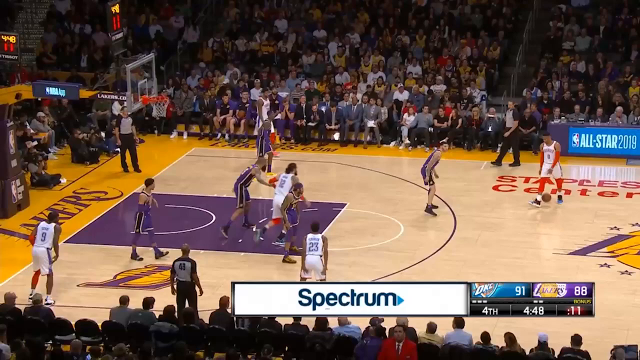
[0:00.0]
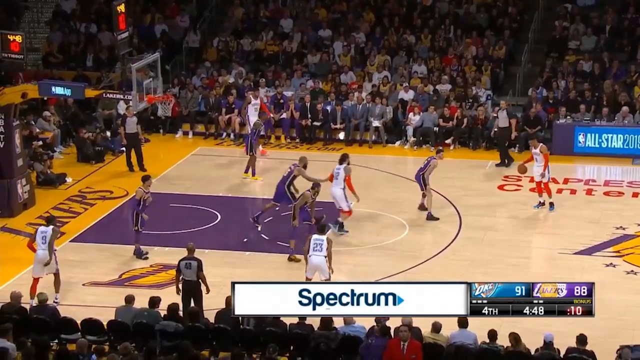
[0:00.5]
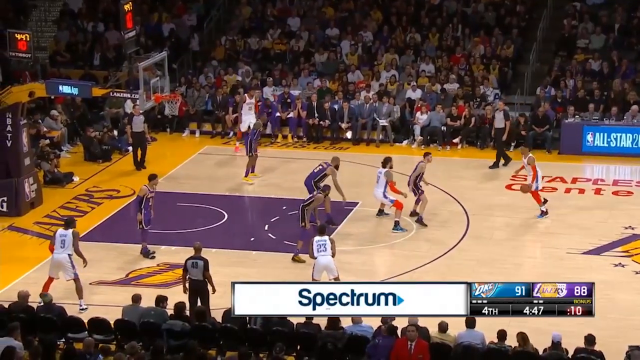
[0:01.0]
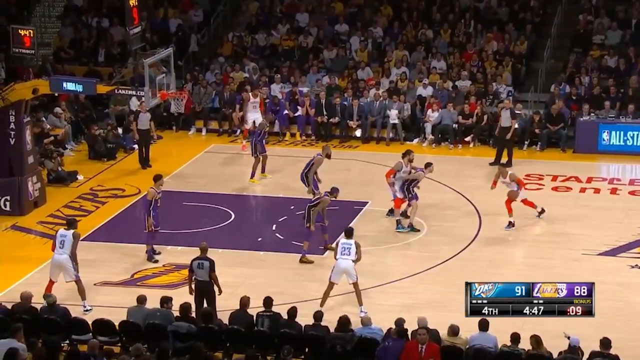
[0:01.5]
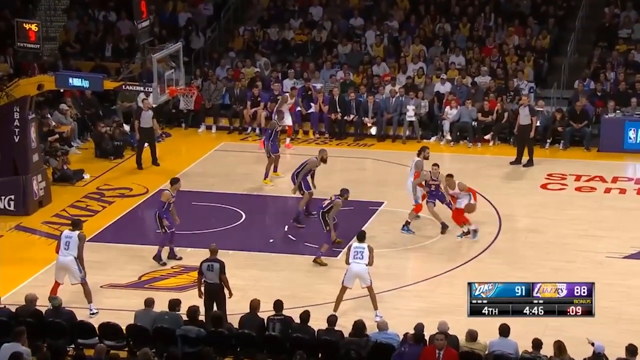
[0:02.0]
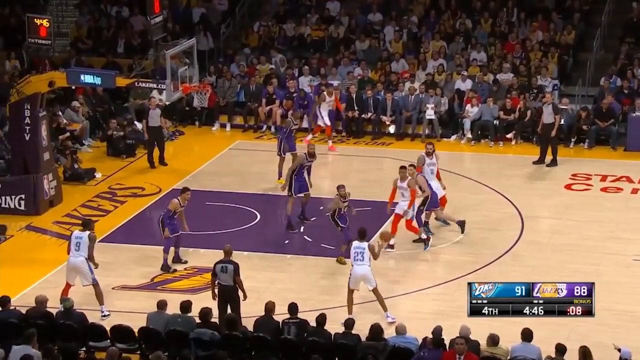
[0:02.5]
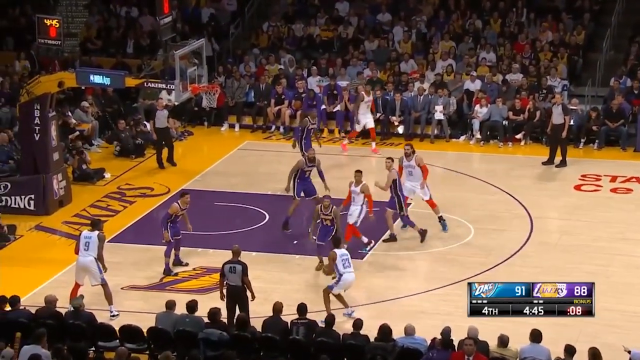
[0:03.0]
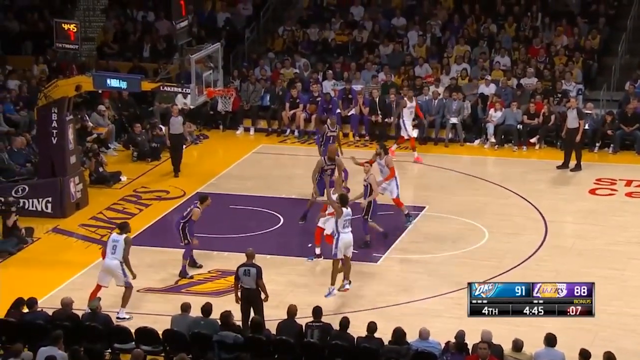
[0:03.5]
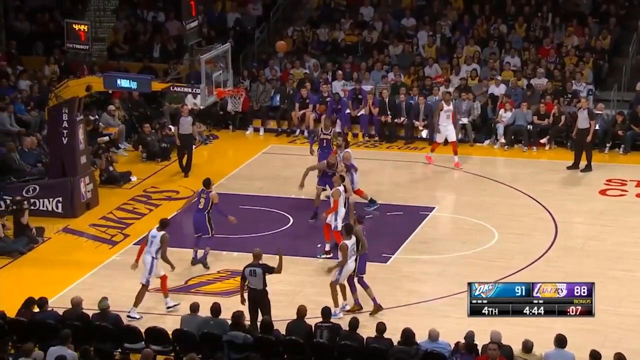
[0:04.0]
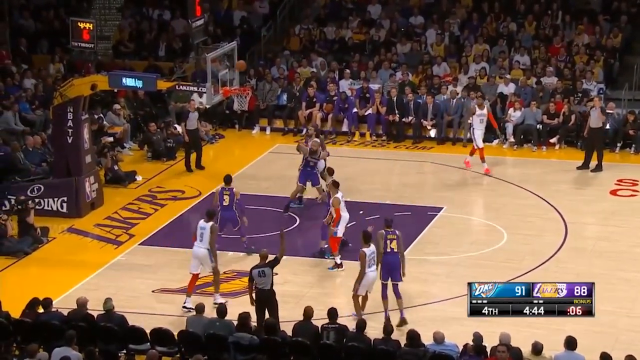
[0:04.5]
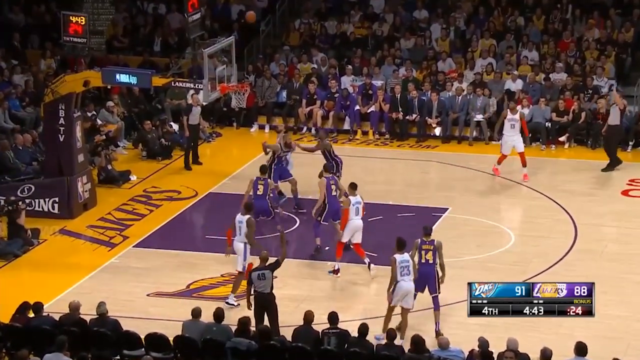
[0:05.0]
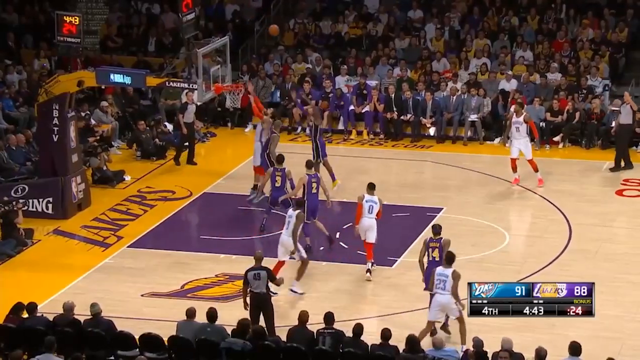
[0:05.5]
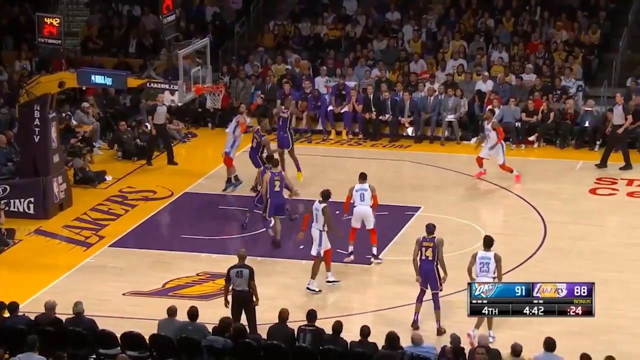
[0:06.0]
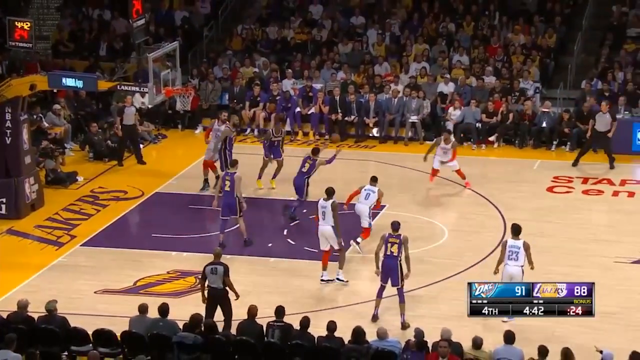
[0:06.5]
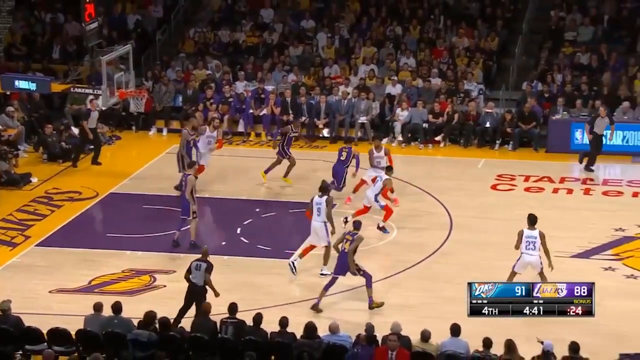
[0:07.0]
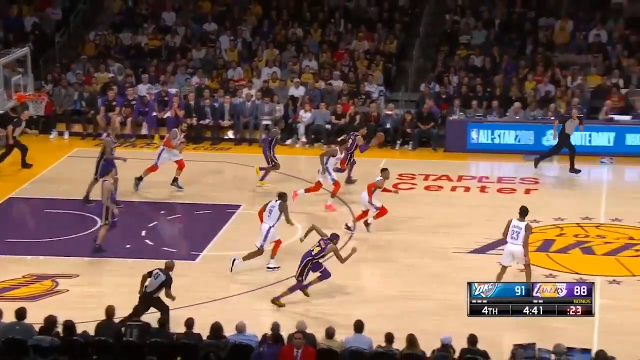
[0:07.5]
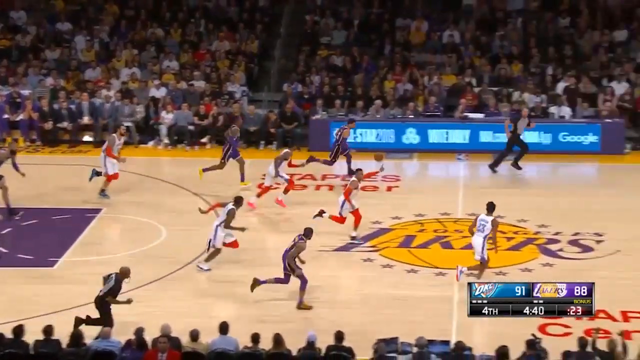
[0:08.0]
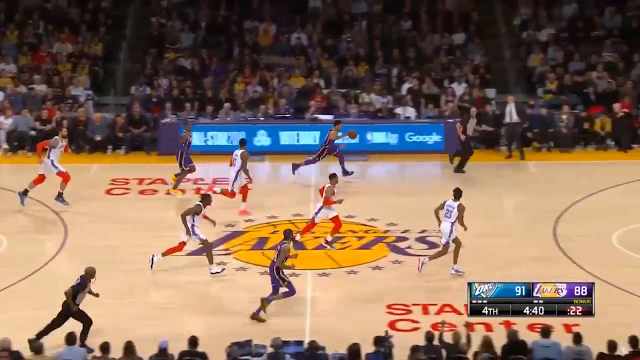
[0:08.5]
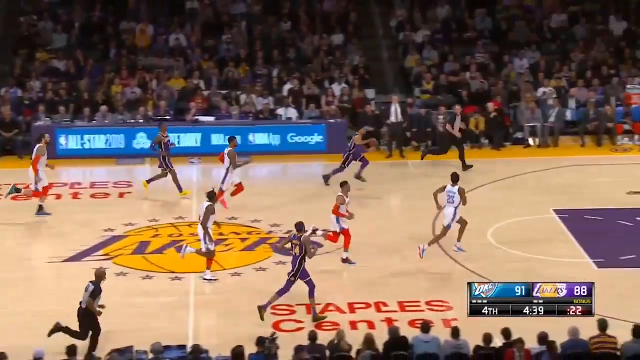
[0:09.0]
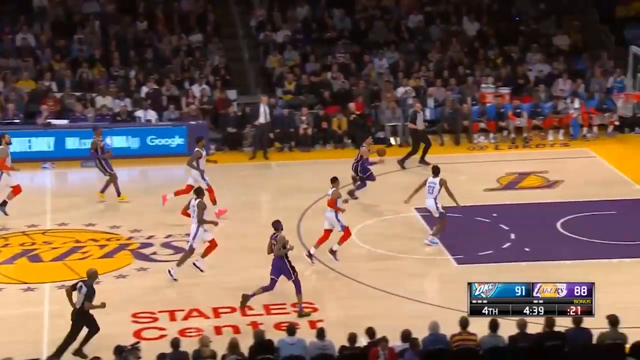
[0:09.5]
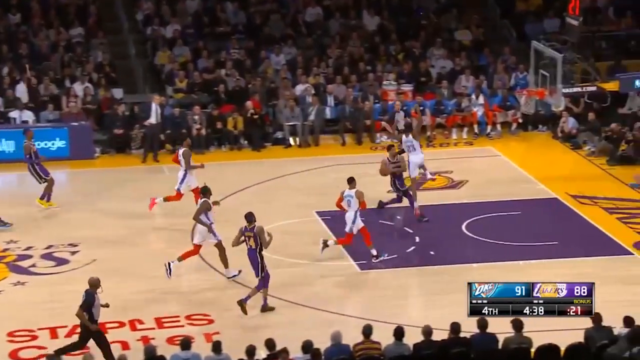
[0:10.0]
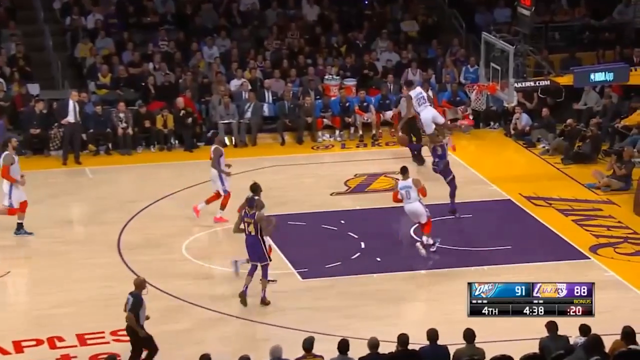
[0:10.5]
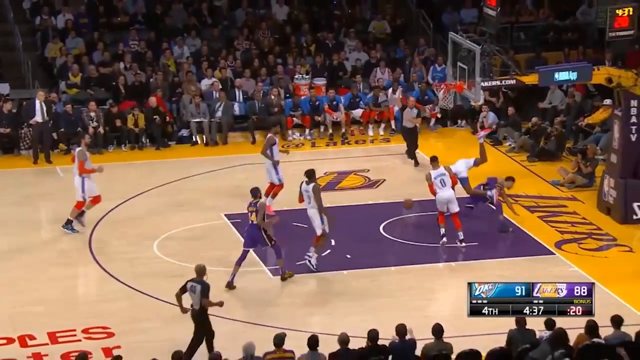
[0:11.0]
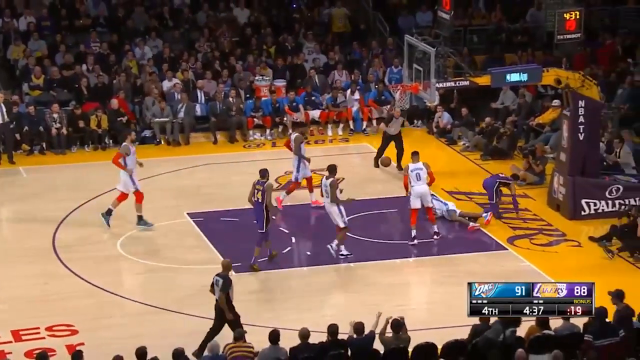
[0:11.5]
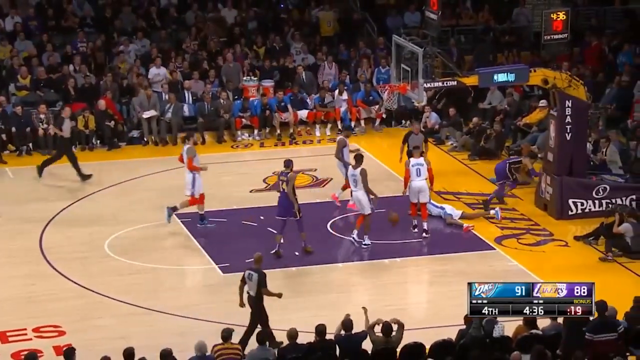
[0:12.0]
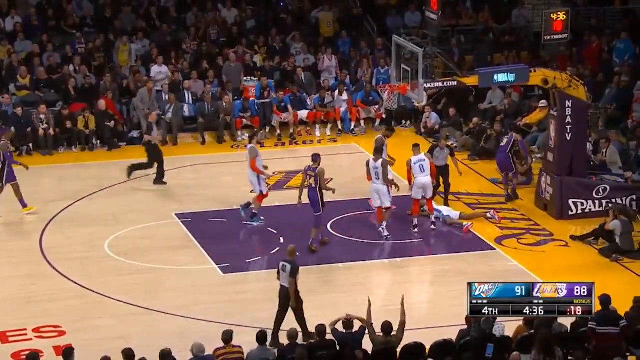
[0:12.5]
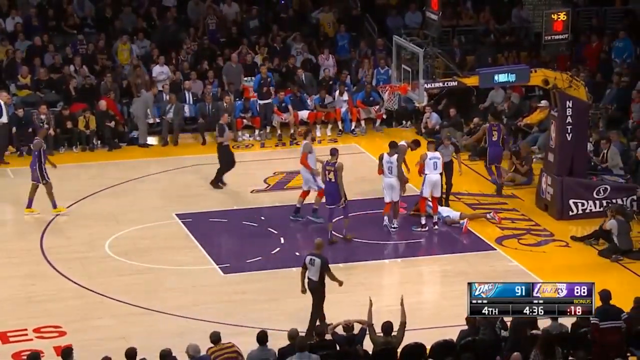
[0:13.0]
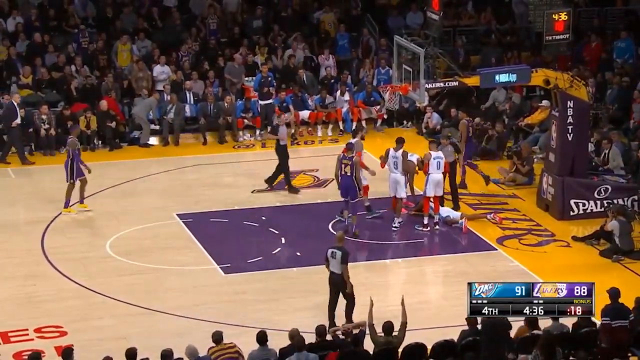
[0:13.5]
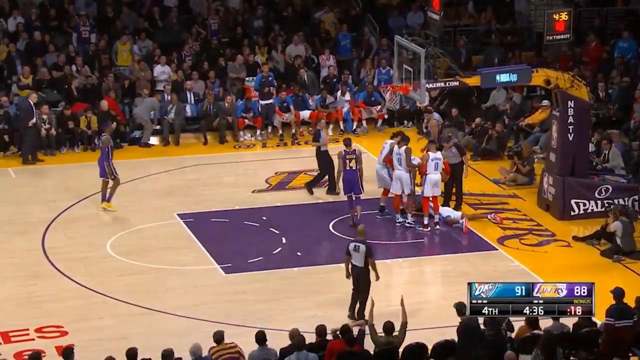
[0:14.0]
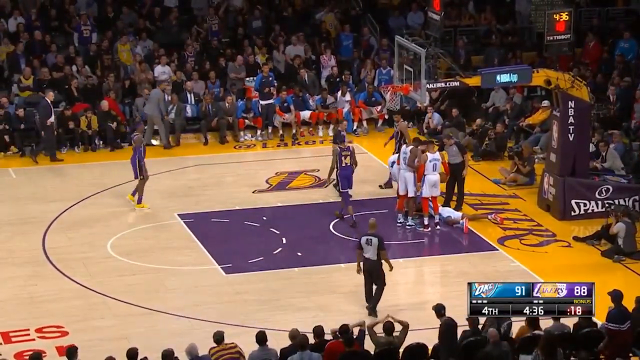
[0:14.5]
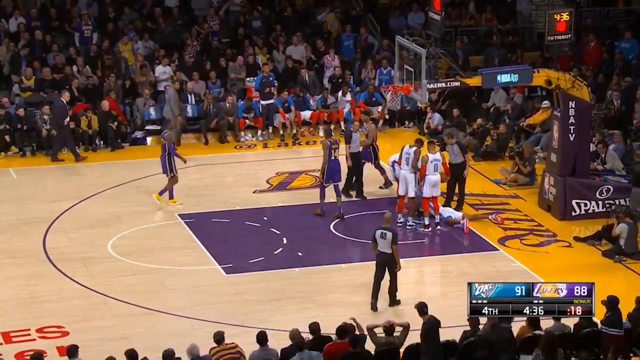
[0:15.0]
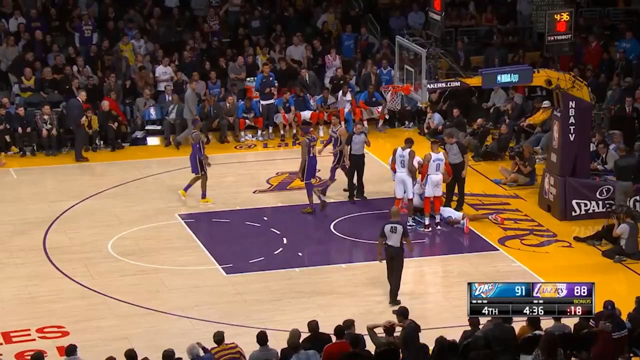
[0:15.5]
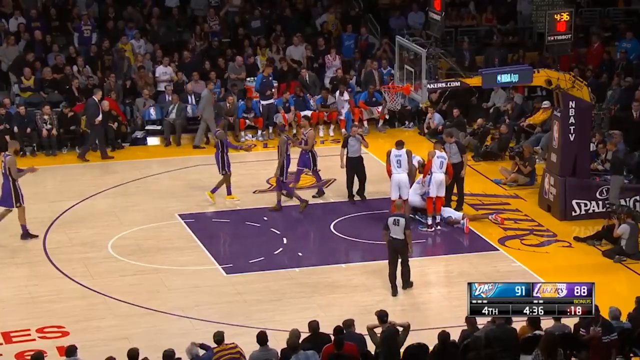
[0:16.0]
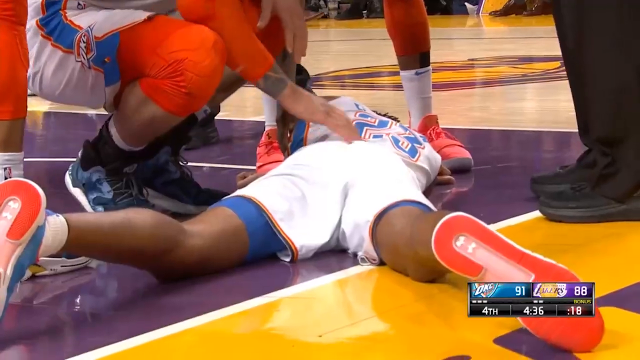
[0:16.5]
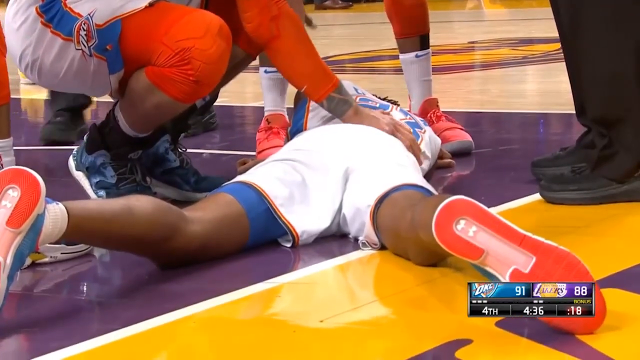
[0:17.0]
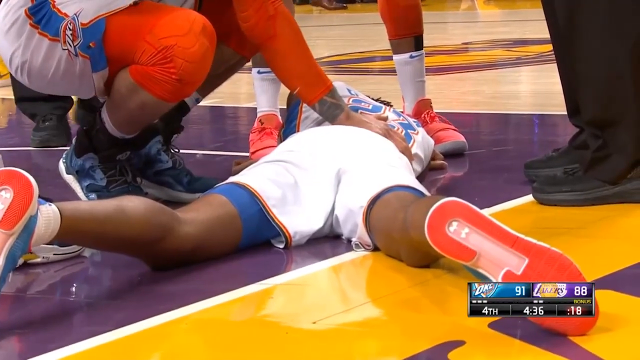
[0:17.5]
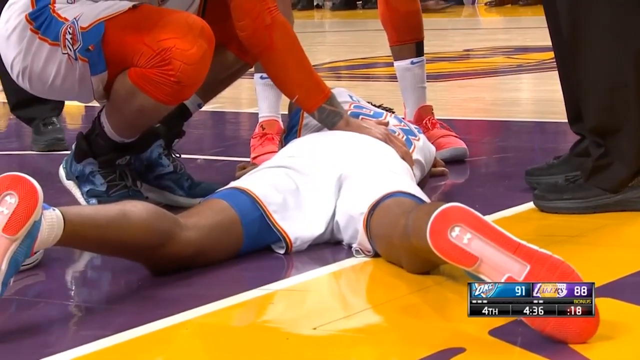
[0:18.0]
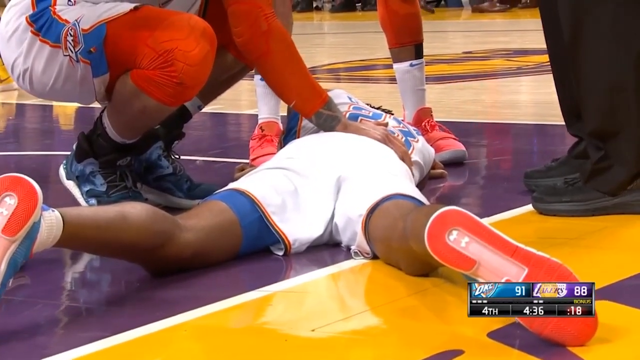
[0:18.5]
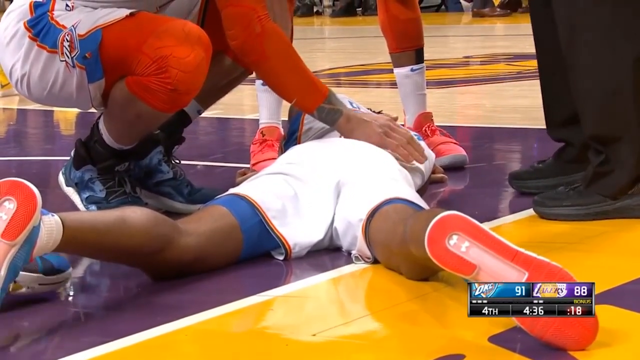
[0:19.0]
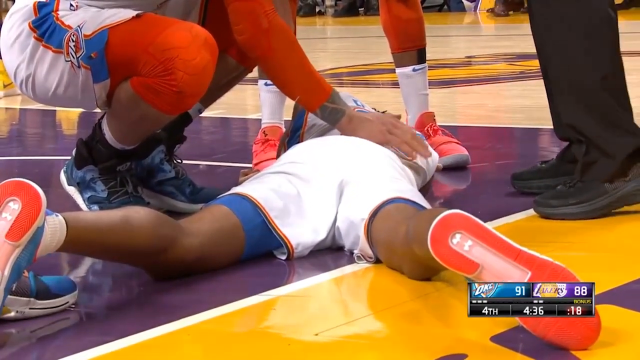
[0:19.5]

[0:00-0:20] An NBA game is underway between the visiting Oklahoma City (OKC) team and the home team, the Los Angeles Lakers. The view is on the left side of the court, and the colors are the Lakers' yellow and purple. The scoreboard shows the fourth period with four minutes and 48 seconds left and 11 seconds on the shot clock; Oklahoma City has 91 and the Lakers have 88, with Oklahoma City in possession. To the left of the scoreboard at the bottom is the advertiser Spectrum. Oklahoma City misses a three-point shot, and the Los Angeles Lakers recover the rebound.